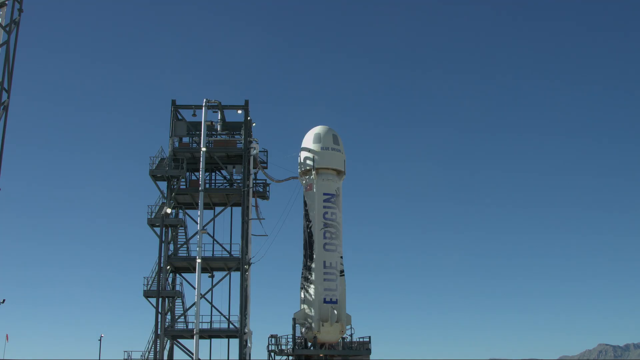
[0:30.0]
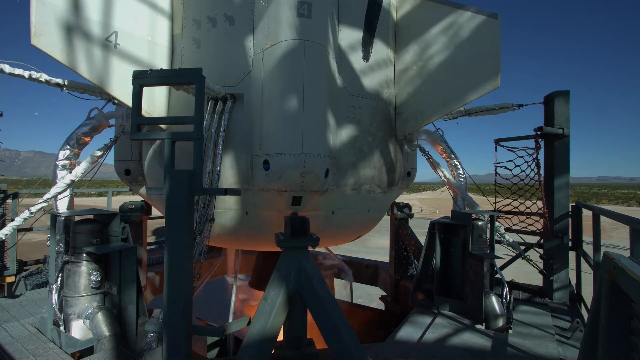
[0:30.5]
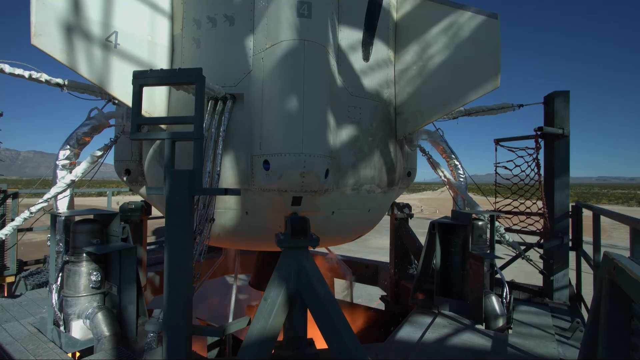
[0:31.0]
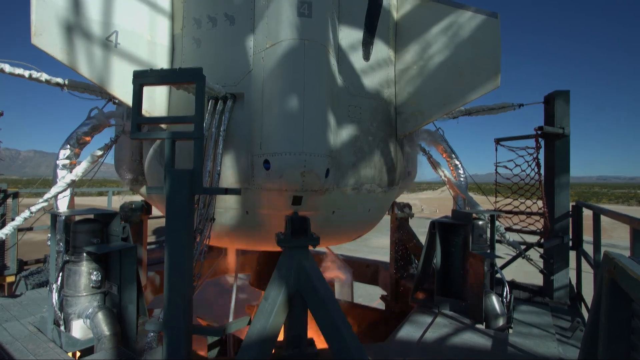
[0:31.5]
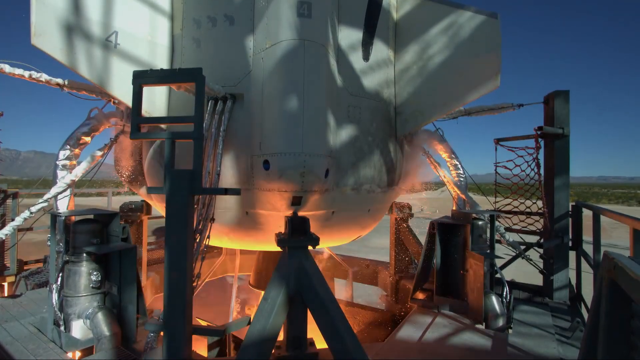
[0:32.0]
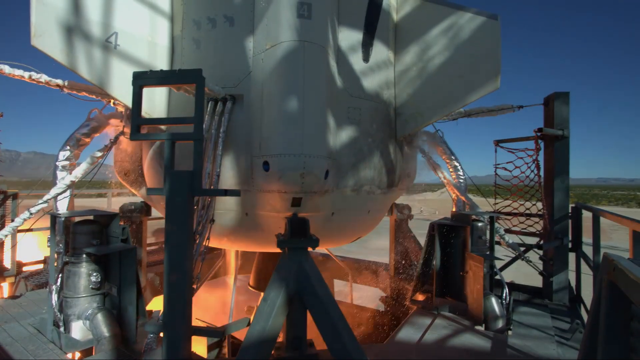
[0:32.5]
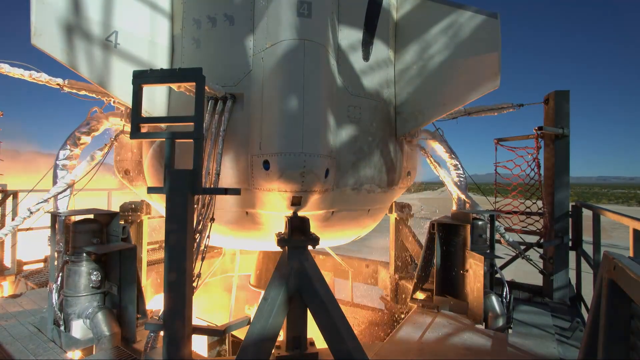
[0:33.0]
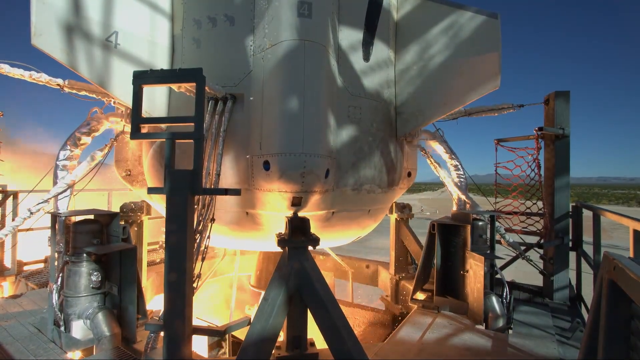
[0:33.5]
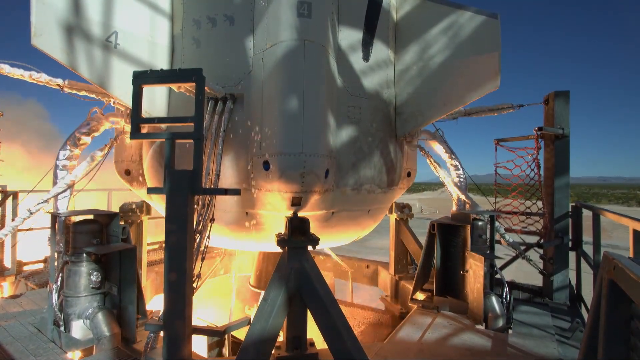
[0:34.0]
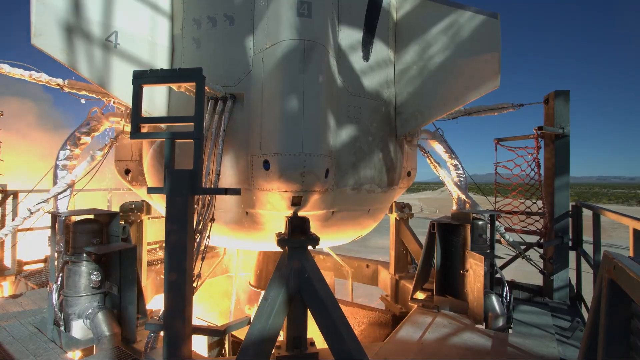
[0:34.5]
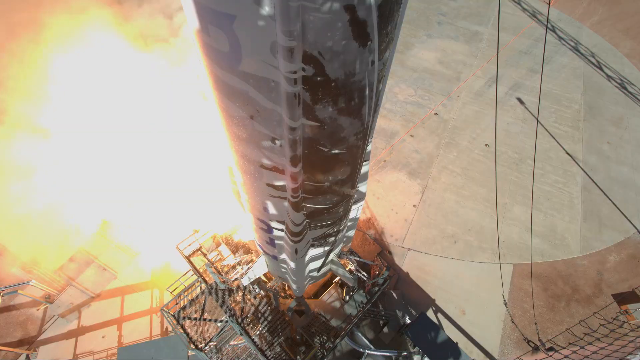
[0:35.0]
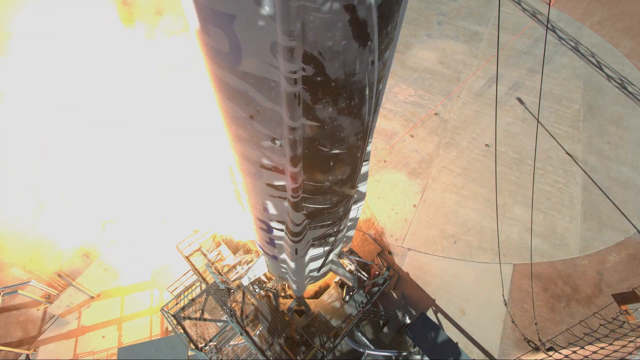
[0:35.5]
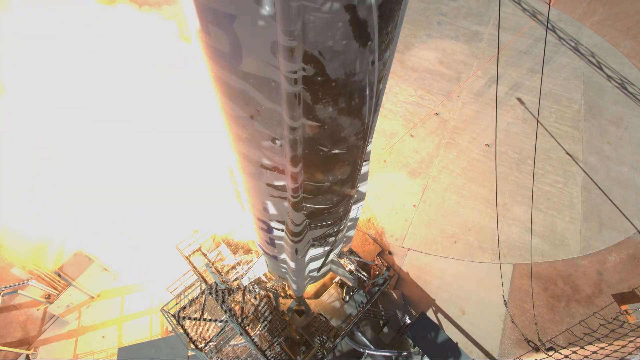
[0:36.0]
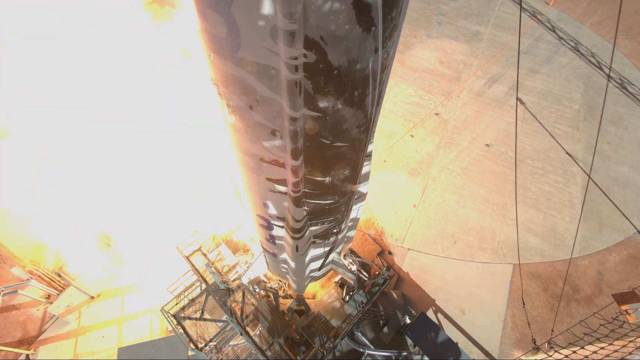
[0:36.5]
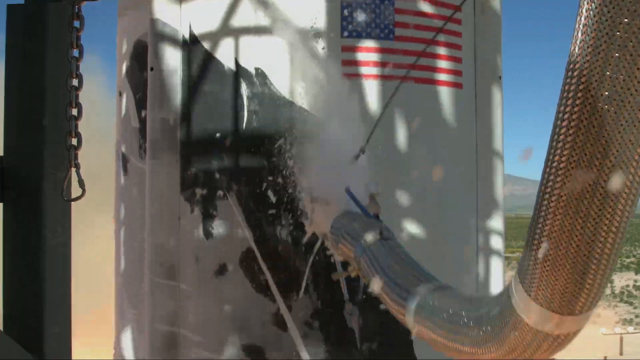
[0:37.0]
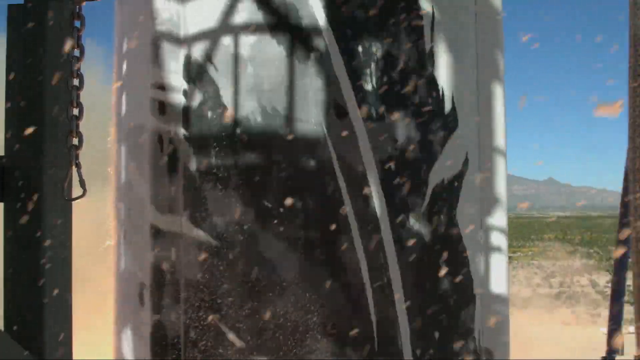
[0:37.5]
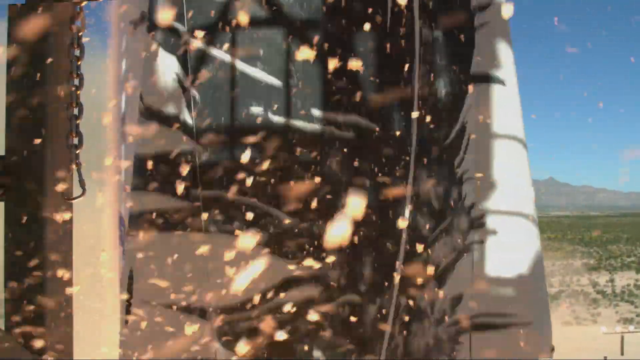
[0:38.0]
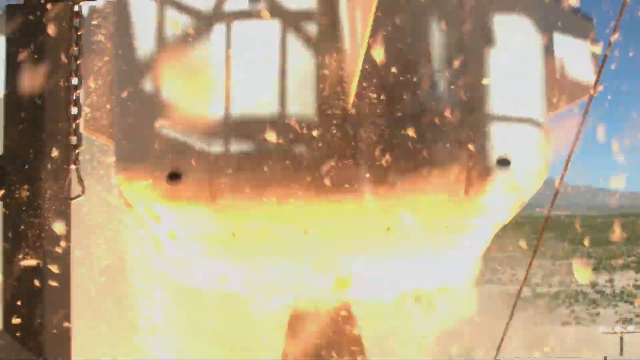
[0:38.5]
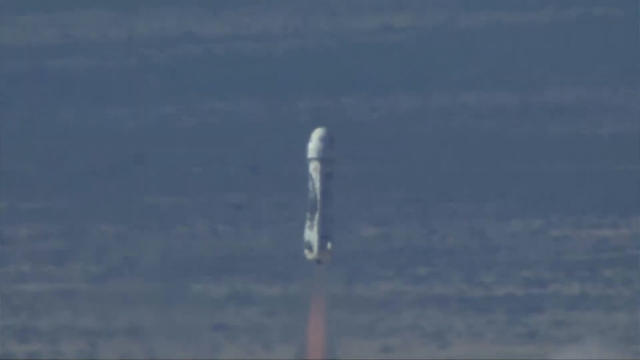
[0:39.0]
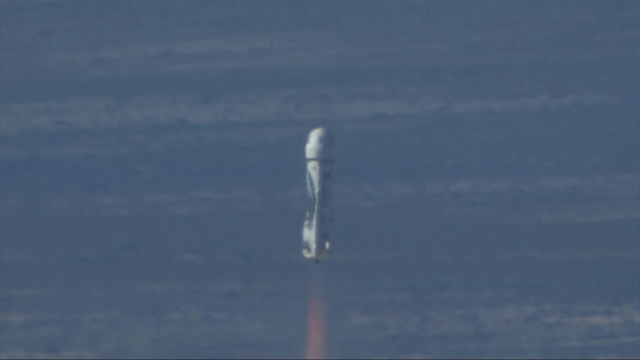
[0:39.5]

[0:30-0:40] The shot shows the top part of the rocket next to the metal scaffolding holding it, against the still deep blue, cloudless sky. The camera moves to the bottom of the rocket, where the launch sequence has been initiated: yellow and orange flames shoot out of the rocket, and the bottom becomes incandescent, glowing white-yellow. The camera moves around to a shot down the shaft of the rocket, with a large area of fire coming out from the left-hand side below. The camera then moves back to the center of the rocket as it begins to launch, the fire visible below it as it moves upward. Finally, the camera shows the entire rocket lifted off, with the barren hillside and blue sky in the background.